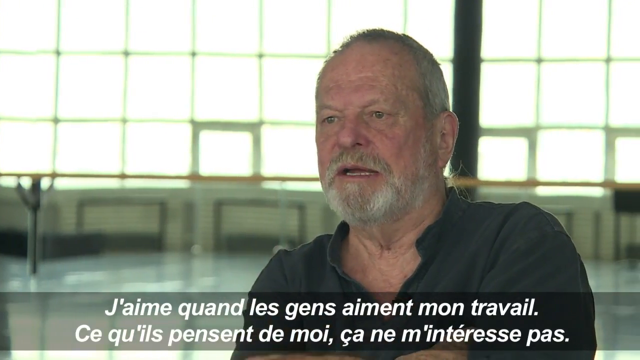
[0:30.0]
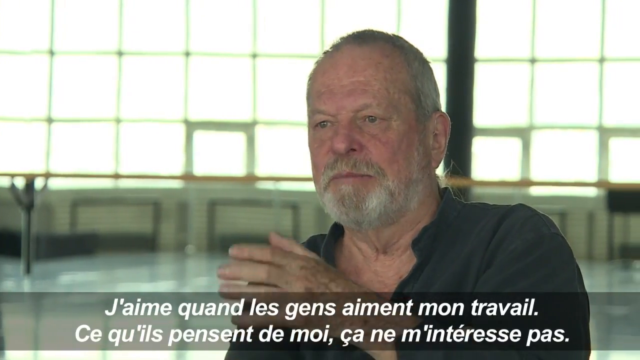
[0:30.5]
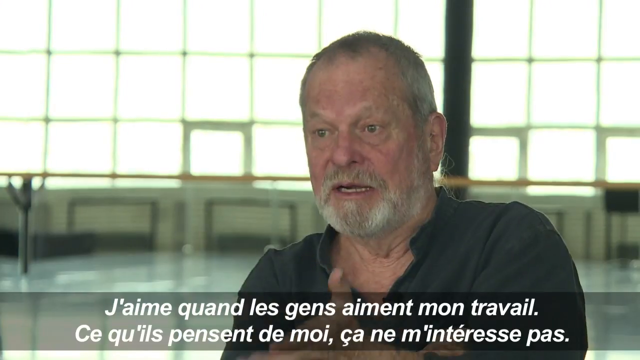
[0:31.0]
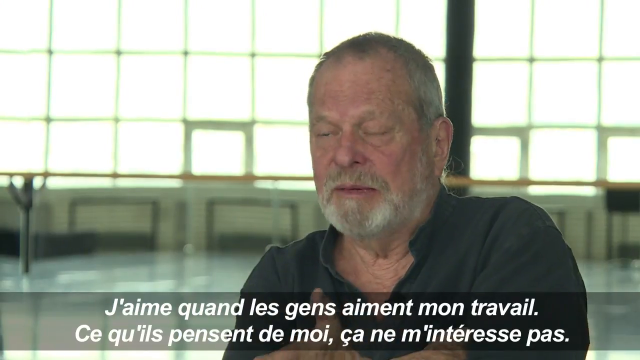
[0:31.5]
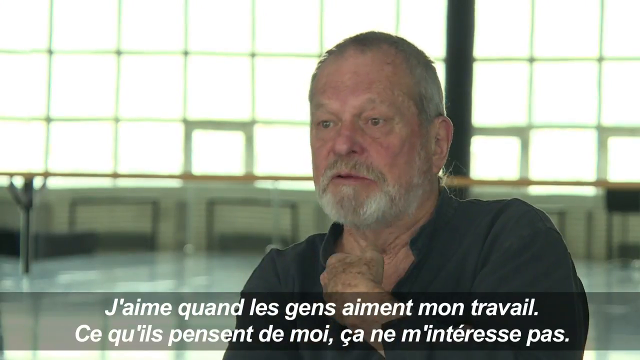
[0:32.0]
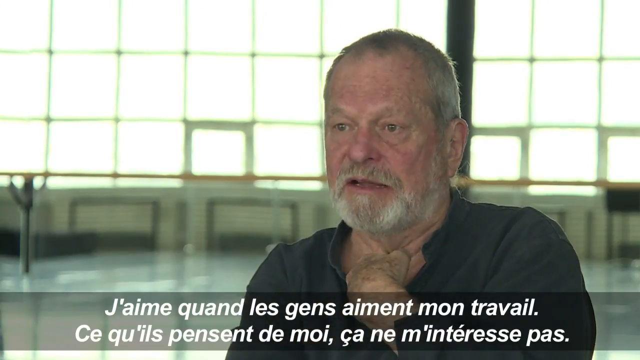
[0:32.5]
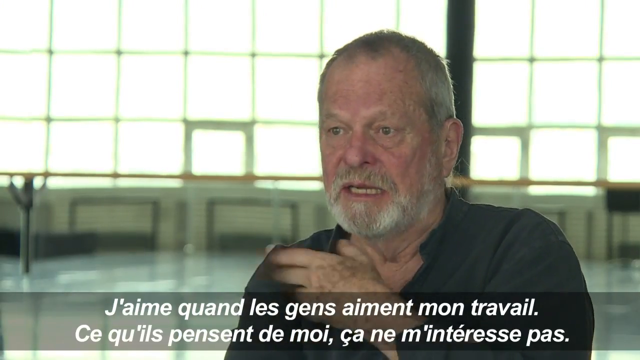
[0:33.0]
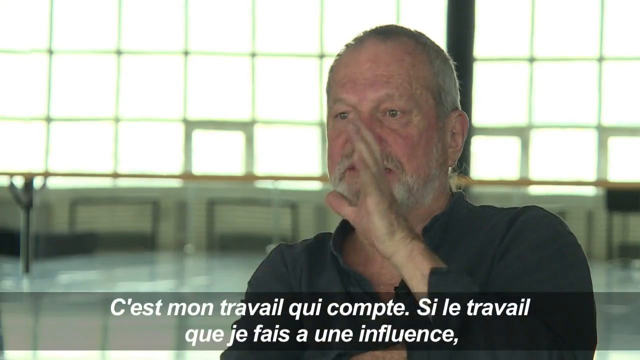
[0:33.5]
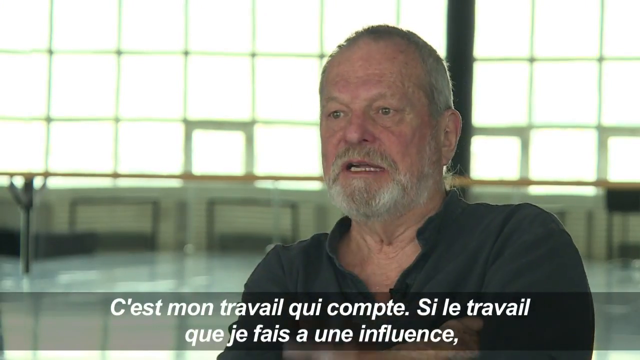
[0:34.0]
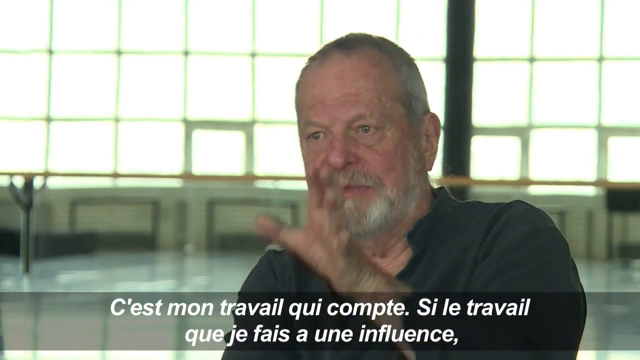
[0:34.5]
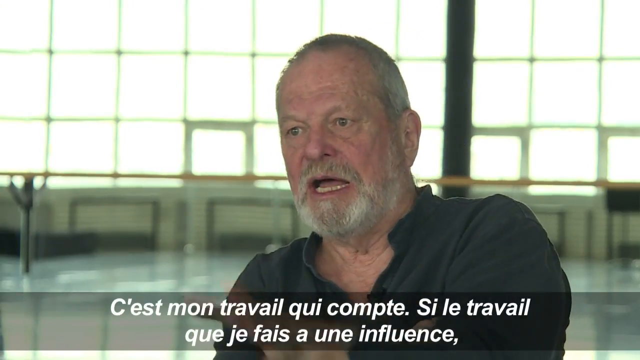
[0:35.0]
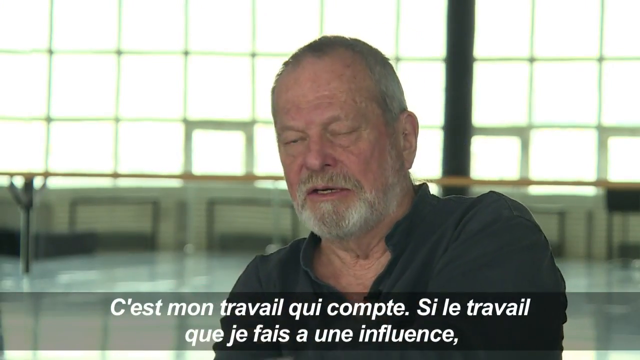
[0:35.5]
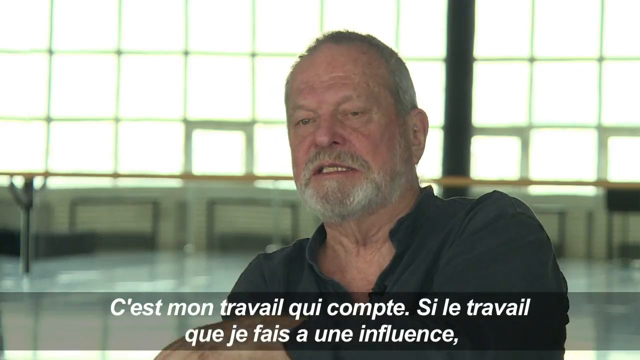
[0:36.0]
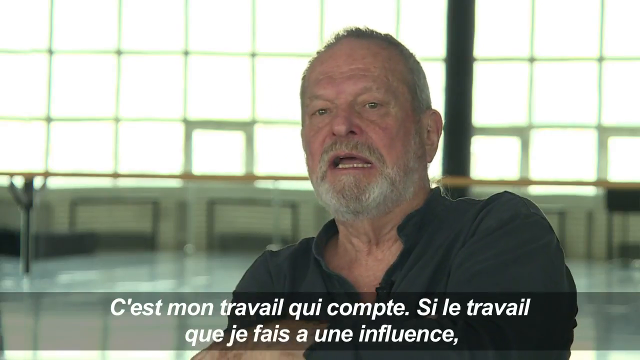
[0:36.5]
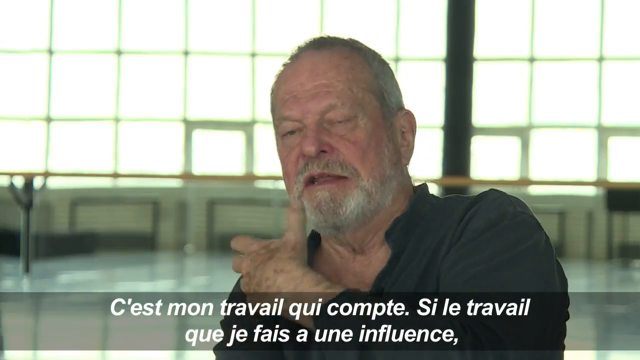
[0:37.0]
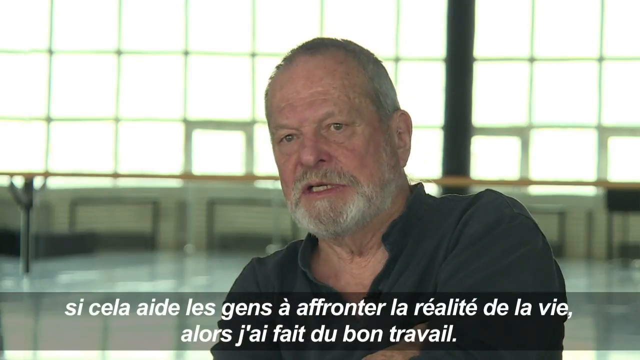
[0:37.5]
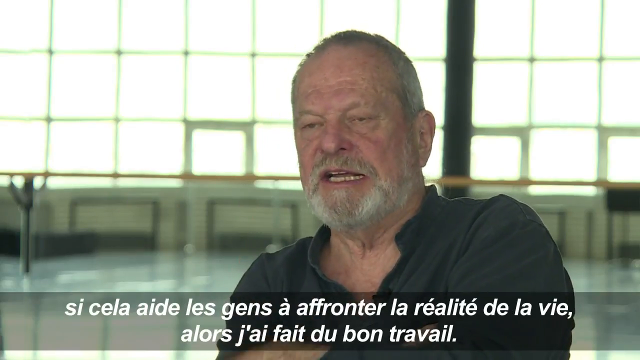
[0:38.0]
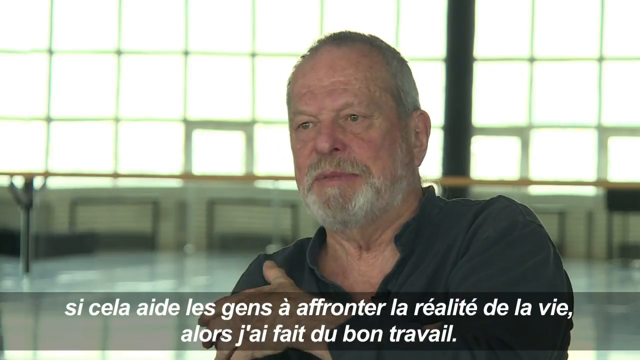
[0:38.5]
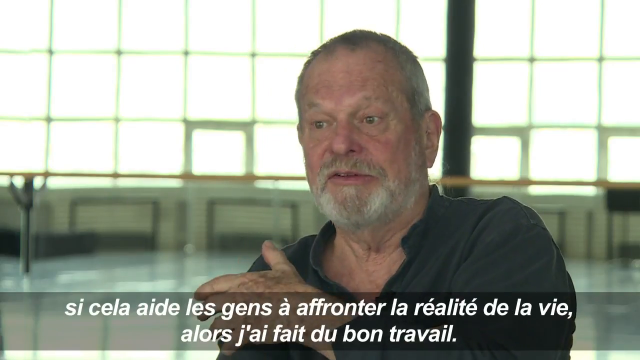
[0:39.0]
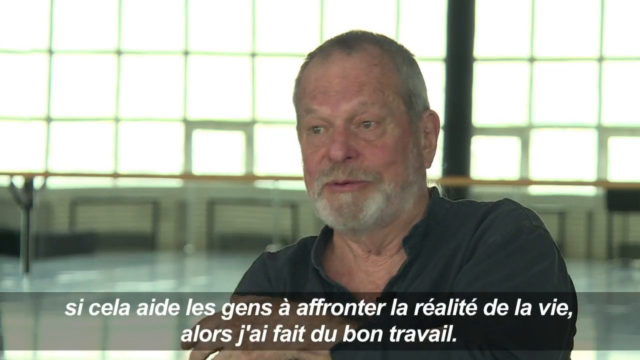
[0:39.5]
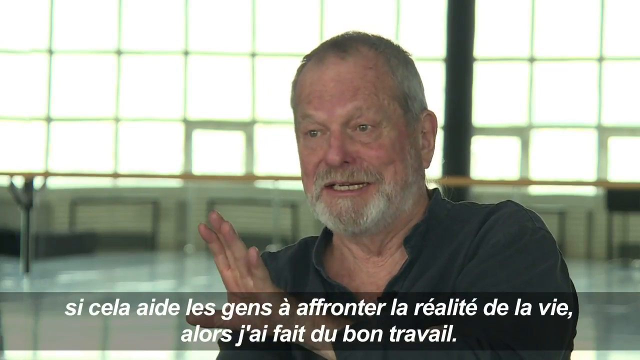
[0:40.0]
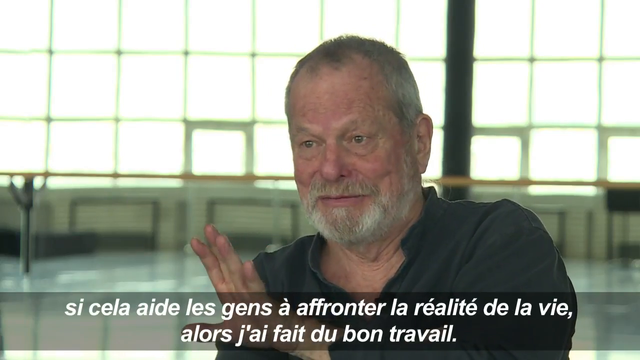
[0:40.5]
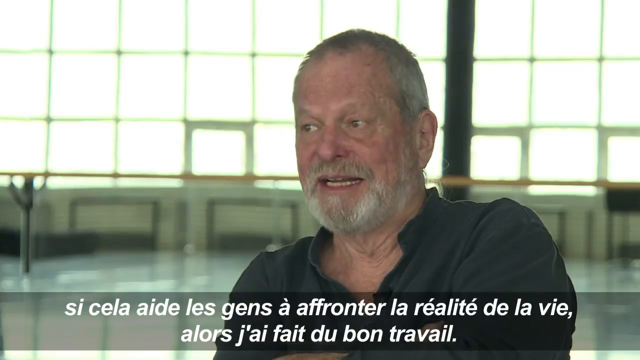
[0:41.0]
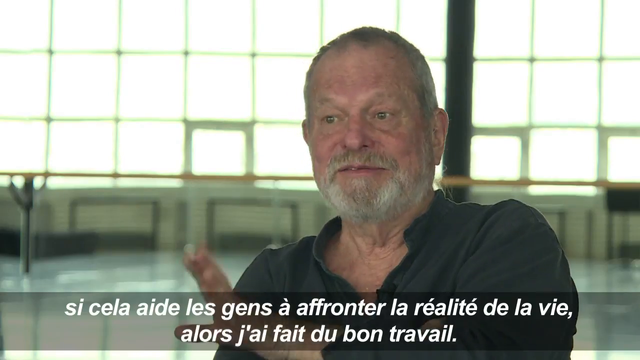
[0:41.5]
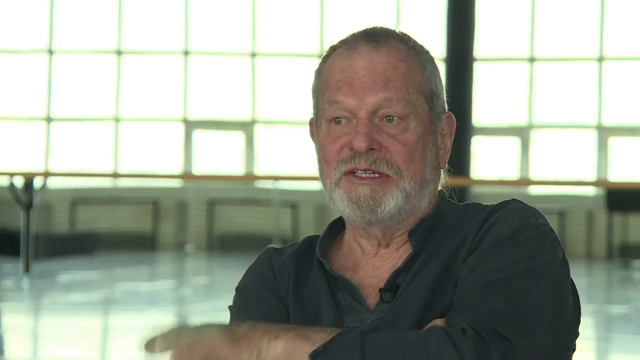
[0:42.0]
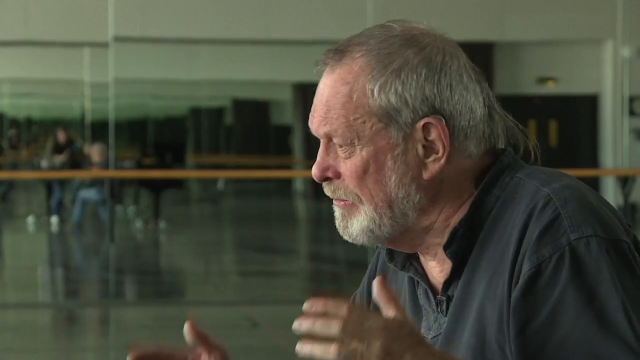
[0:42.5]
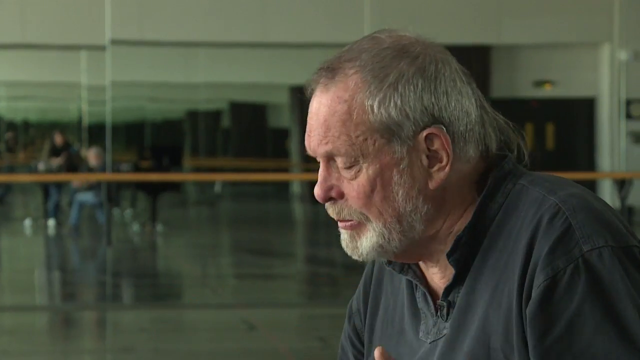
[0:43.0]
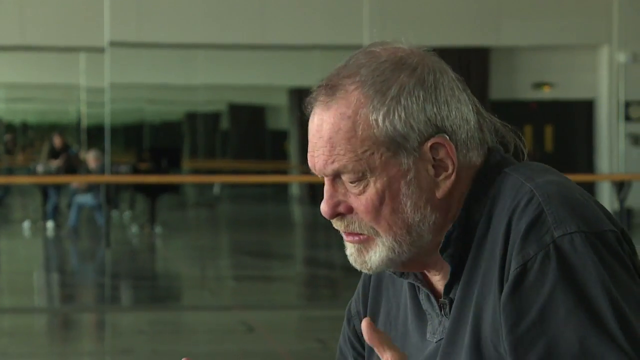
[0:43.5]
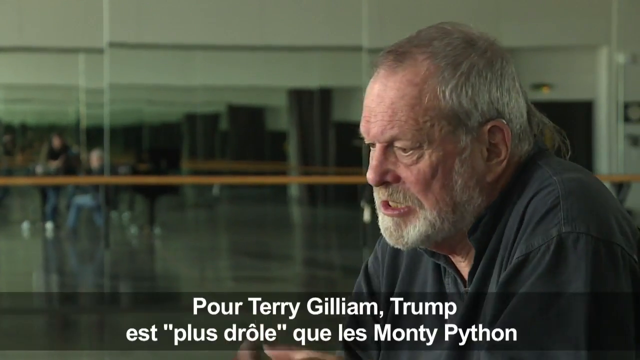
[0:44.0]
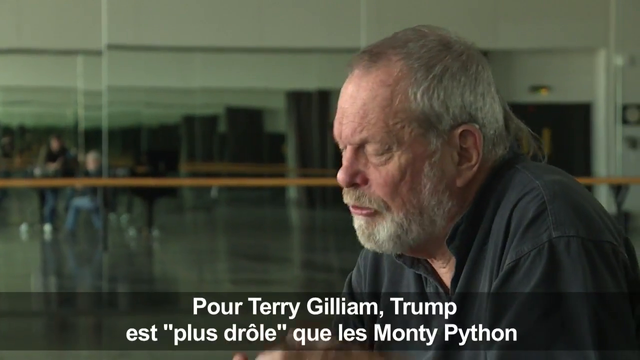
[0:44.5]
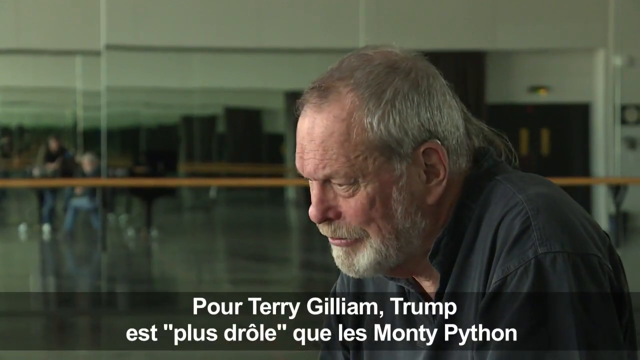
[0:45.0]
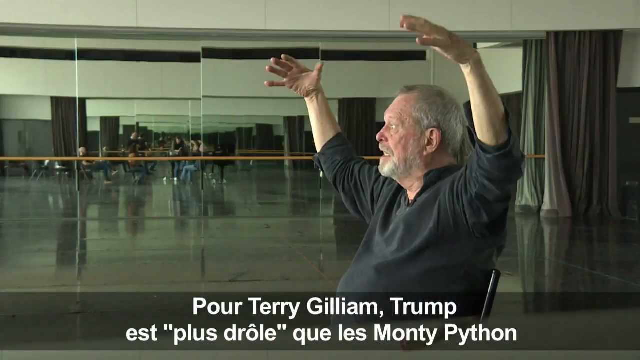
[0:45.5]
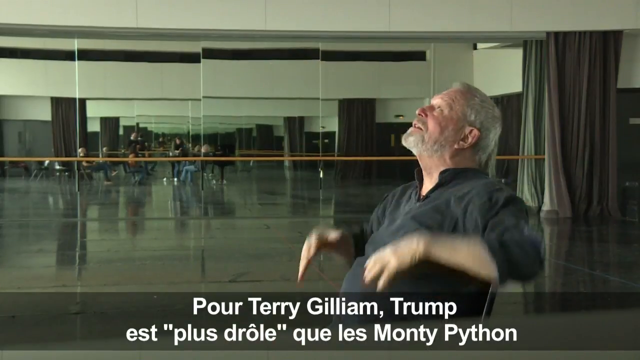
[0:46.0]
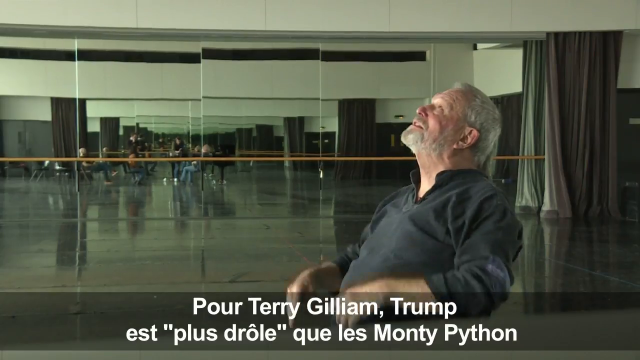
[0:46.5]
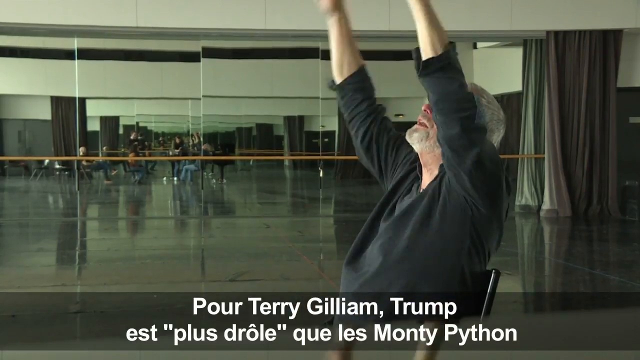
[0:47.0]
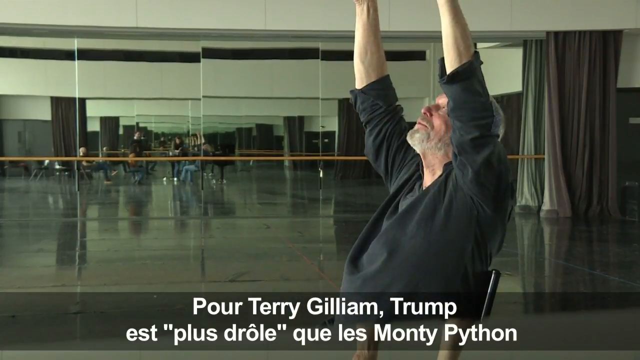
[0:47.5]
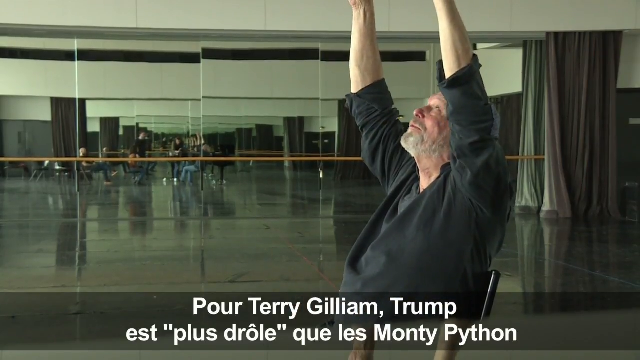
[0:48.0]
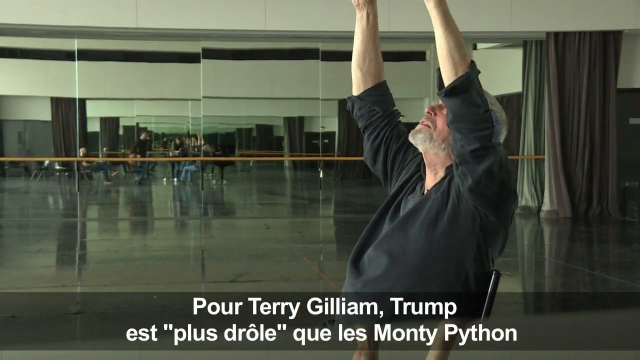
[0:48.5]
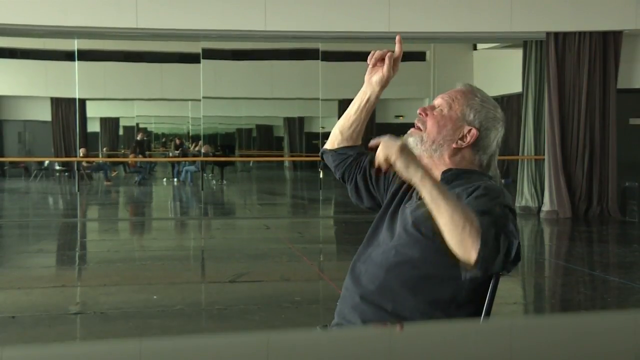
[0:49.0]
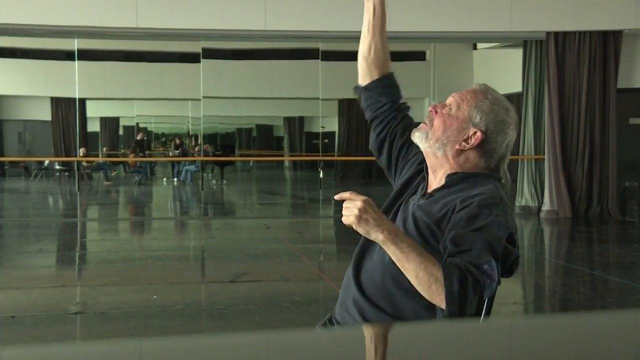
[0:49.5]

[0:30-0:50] The man appears to be sitting, seen from the chest up, wearing a dark collared shirt, with translating text still at the bottom of the screen. He moves his arms as he speaks, holding his fist to his chest or just under his throat and speaking with his hands. At certain points his head shakes back and forth or nods up and down for emphasis. The shot changes from a straight-on view to a side angle. In the background there appear to be mirrors, which show a couple of people possibly sitting. The translation continues as he speaks. At one moment he raises his hands high and looks upward, seemingly emphasizing something huge or upward; his hands stay up for a moment, and then he points straight up in the air.